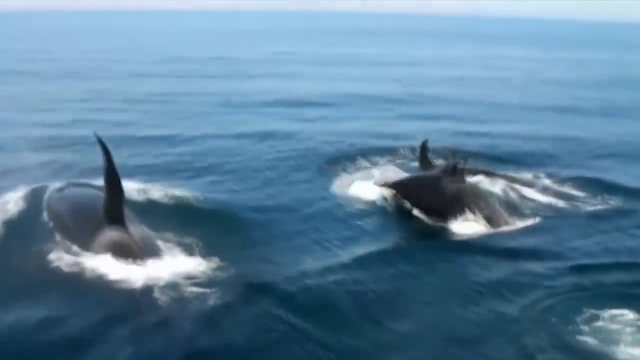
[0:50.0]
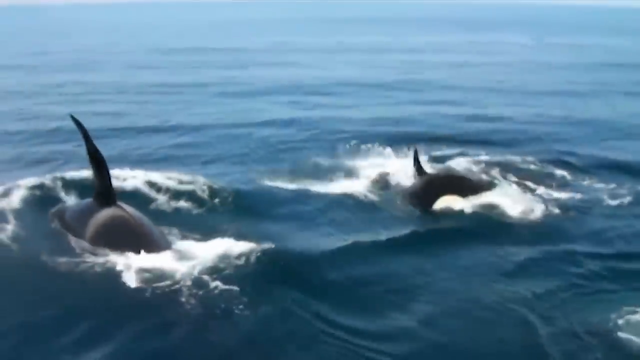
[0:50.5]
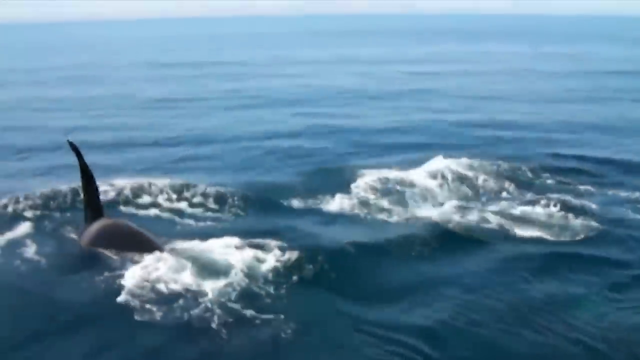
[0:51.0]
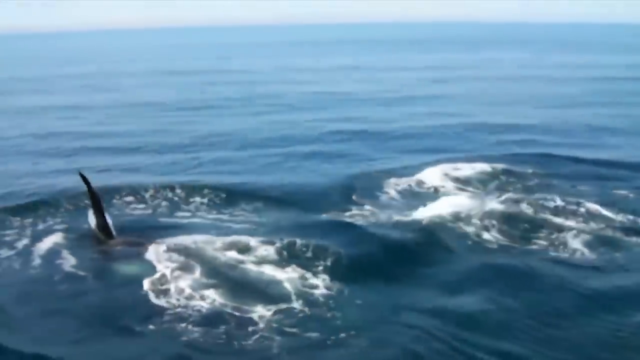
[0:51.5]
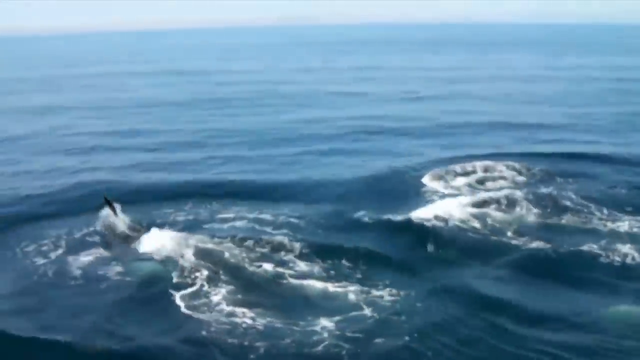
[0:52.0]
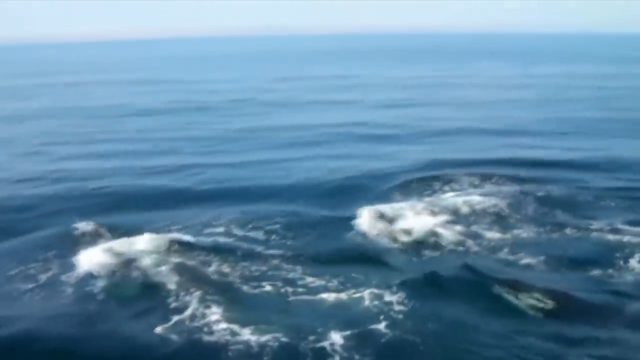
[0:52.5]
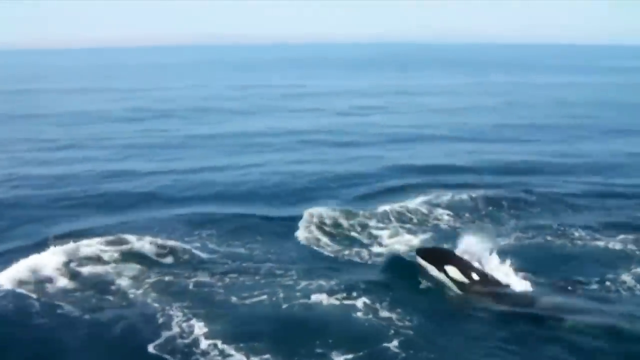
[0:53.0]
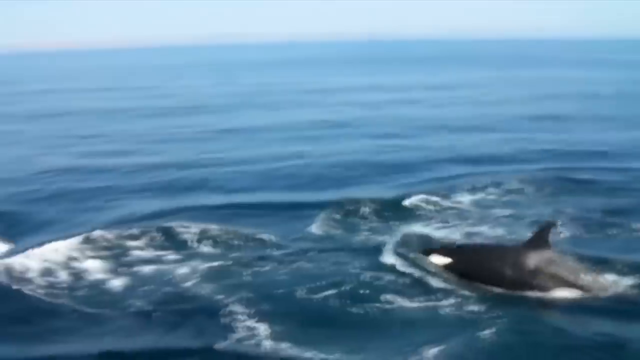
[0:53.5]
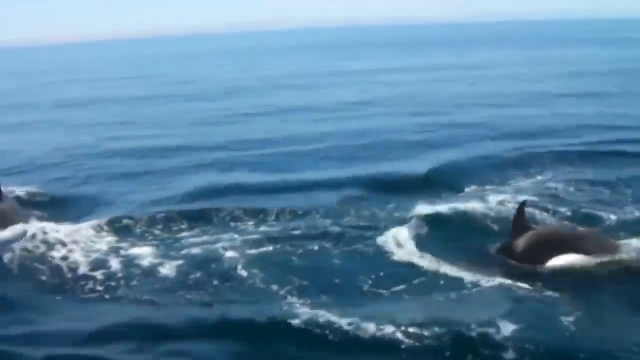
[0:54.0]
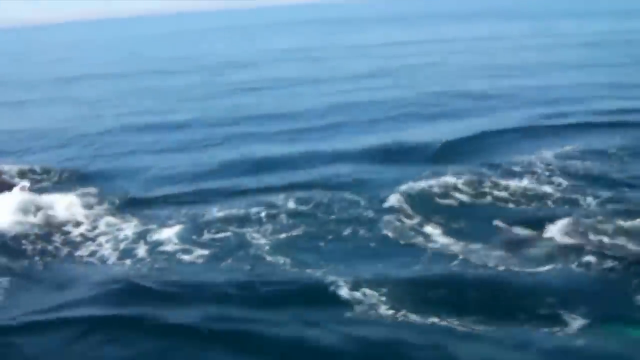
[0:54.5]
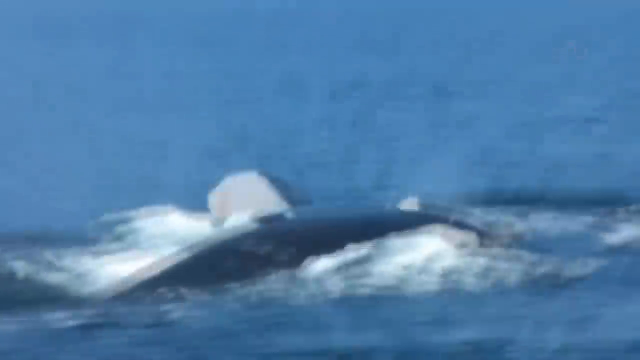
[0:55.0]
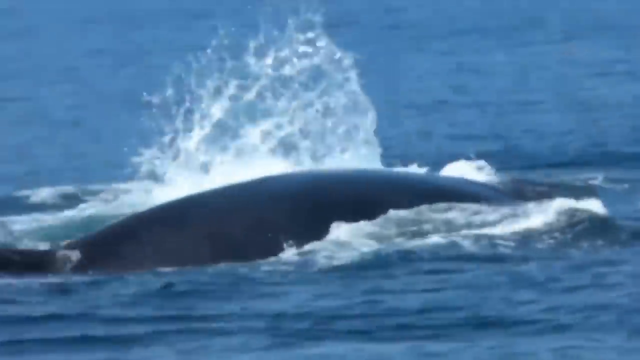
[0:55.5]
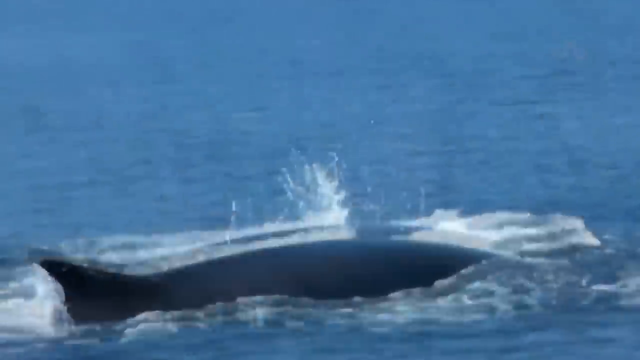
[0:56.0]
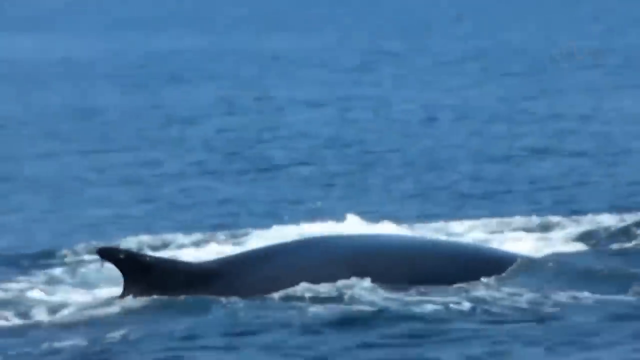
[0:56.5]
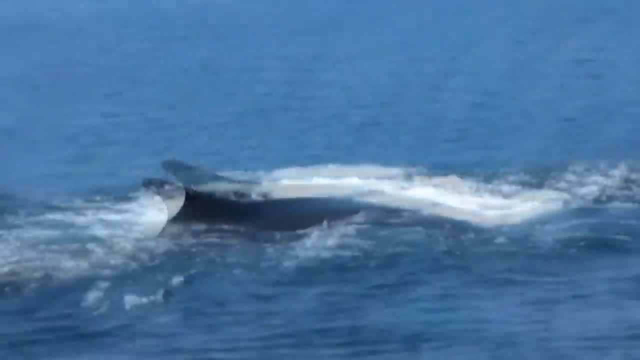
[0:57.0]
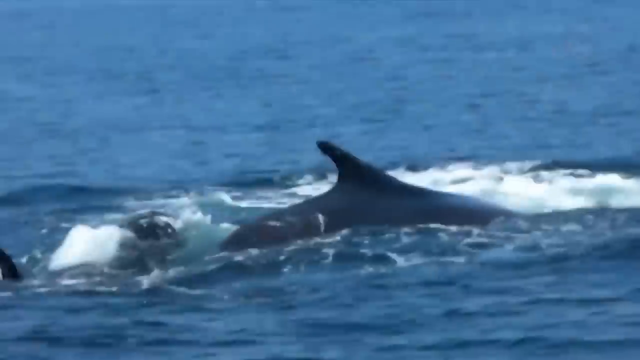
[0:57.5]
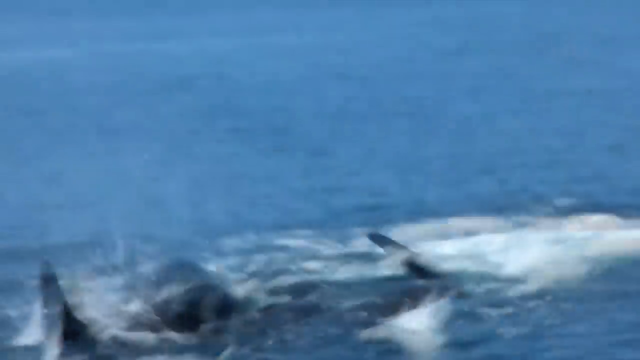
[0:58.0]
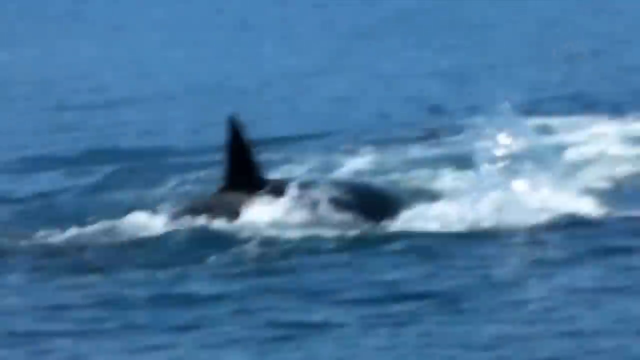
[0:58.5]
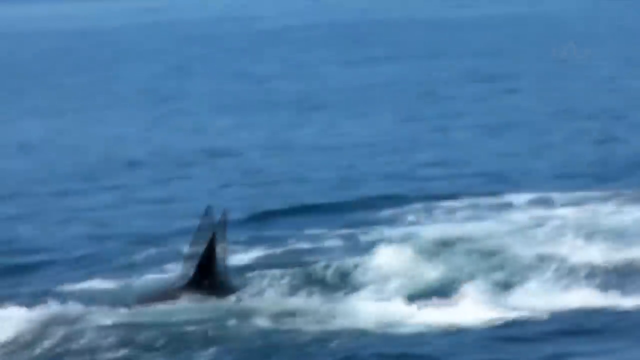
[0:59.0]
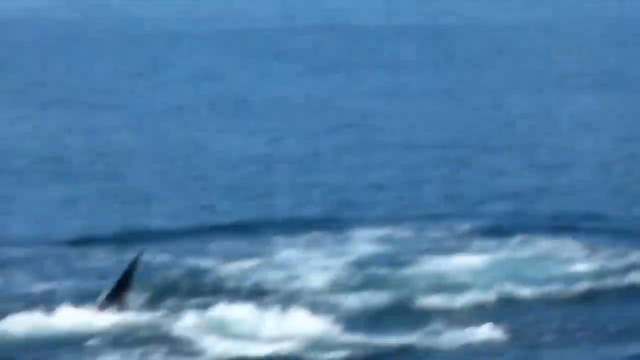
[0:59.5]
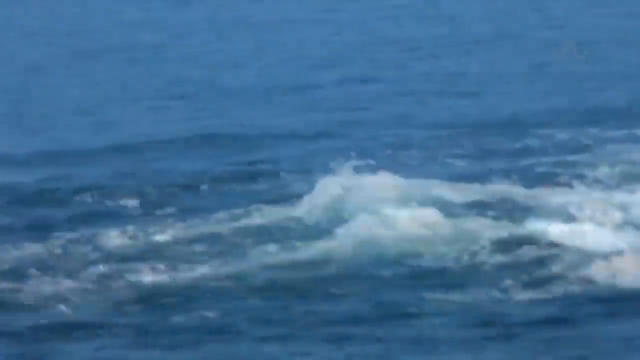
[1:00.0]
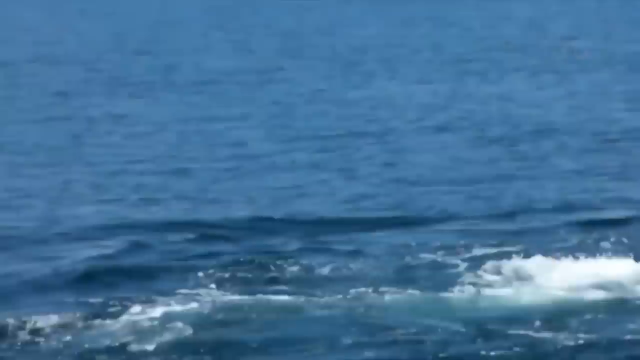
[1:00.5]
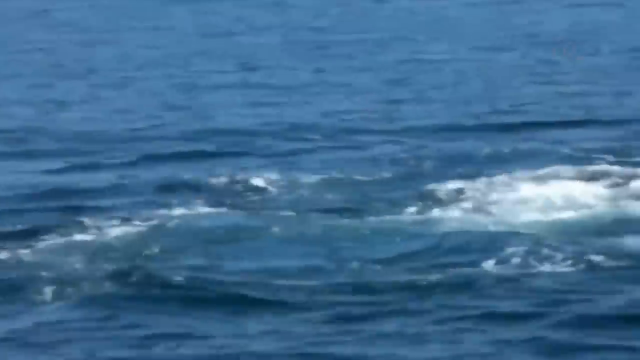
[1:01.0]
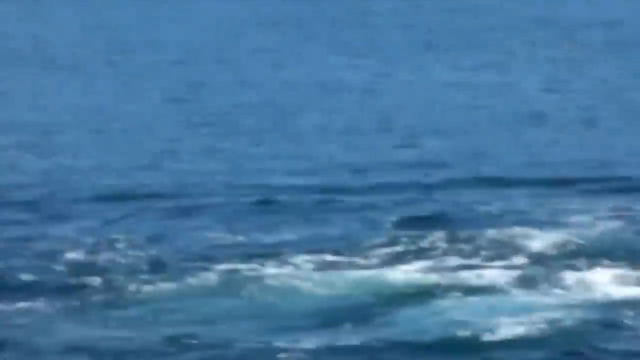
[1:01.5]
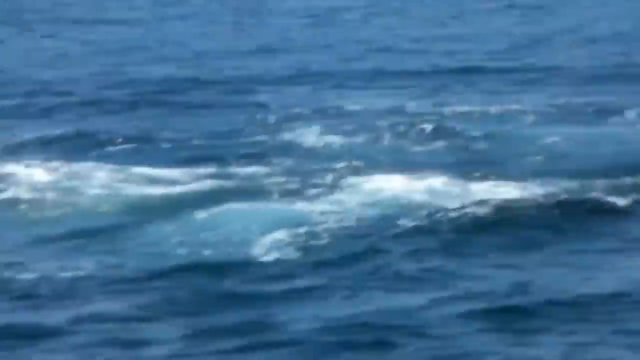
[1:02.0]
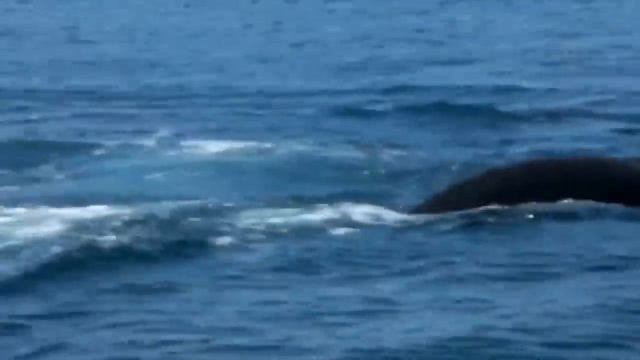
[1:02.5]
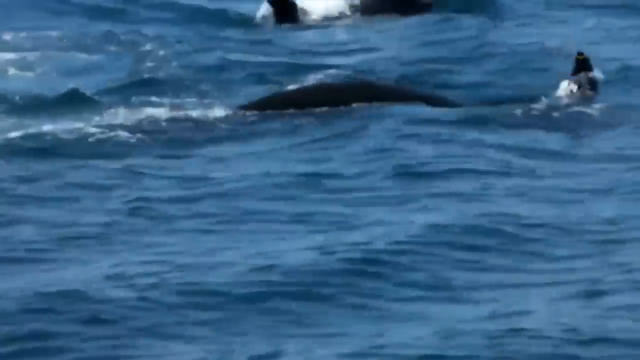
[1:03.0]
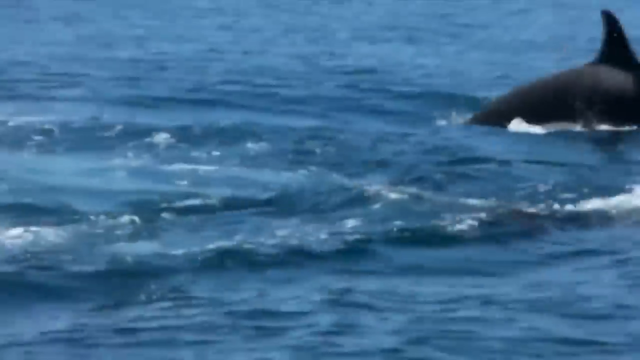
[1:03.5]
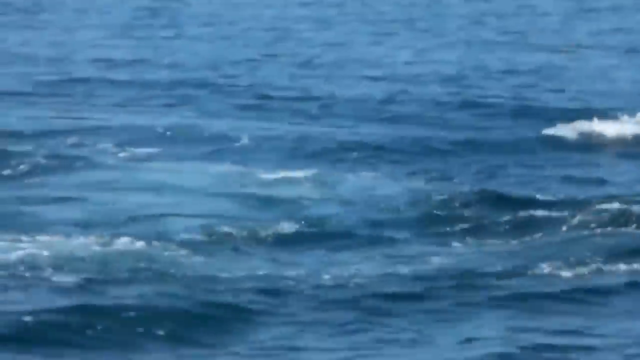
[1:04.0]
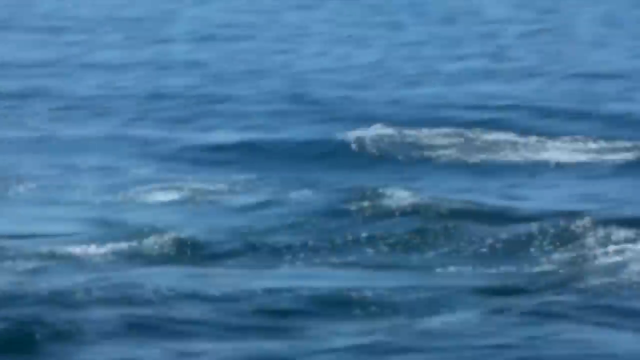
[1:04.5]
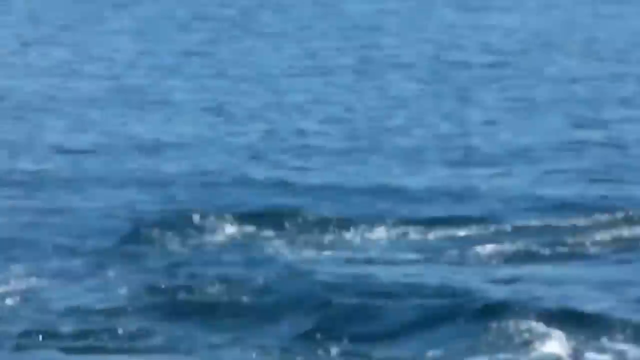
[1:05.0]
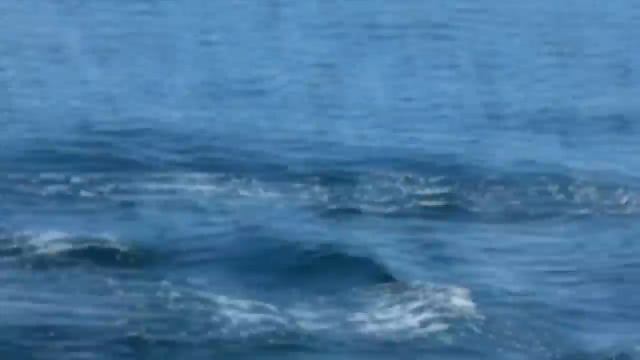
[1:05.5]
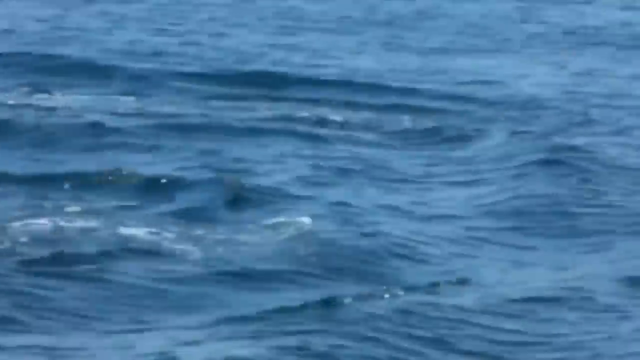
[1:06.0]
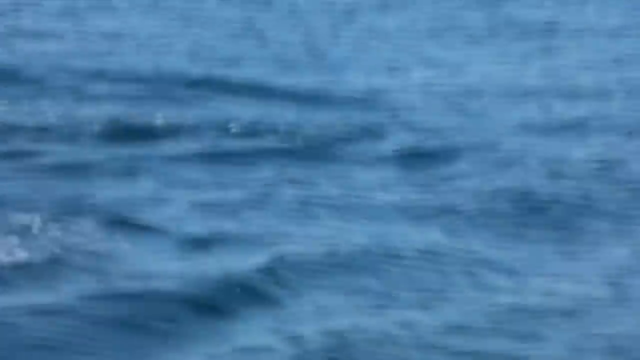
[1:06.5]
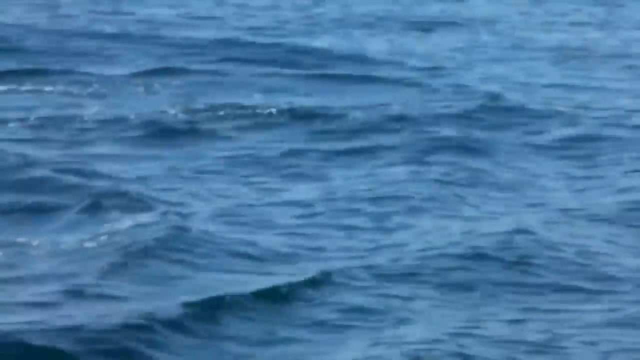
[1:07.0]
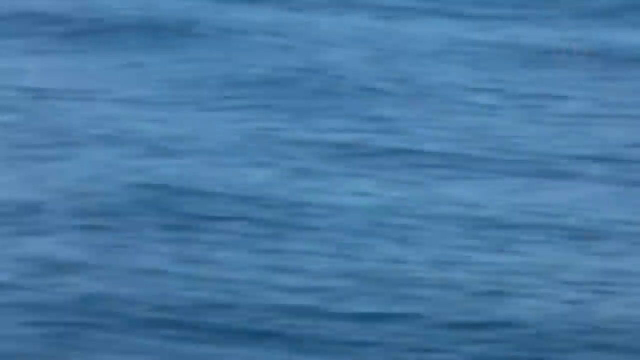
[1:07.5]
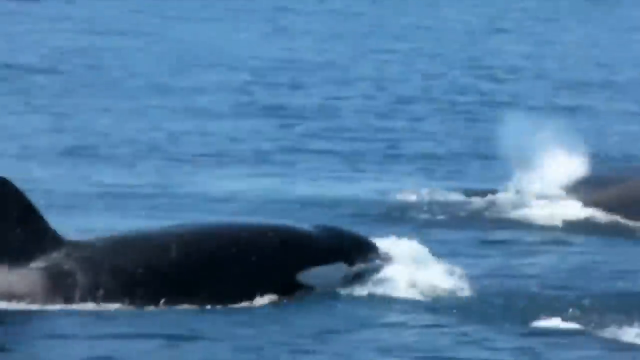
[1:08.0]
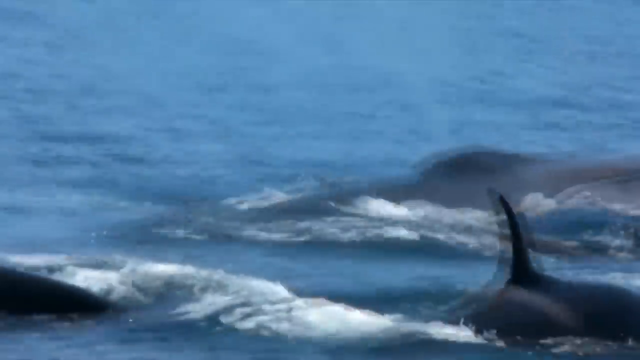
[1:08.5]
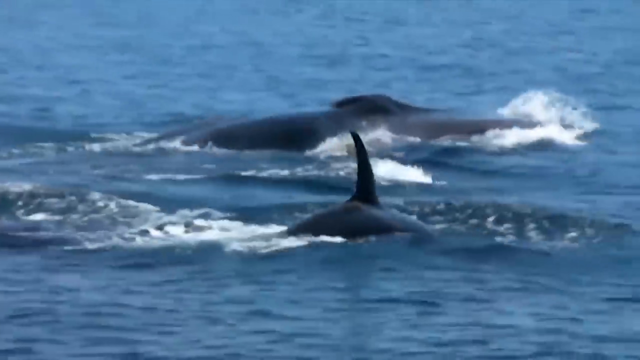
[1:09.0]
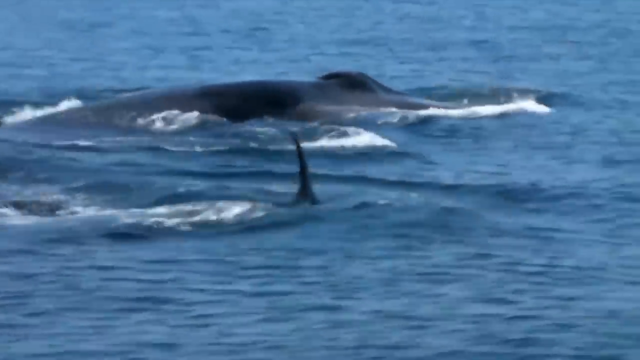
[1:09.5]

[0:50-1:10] A group of three orcas appears: a large one on the left-hand side and two smaller orcas off to the right-hand side of the screen. The whales breach the surface, exposing their dorsal fins, before disappearing back below. As they go under, a large ripple of water projects outward from each of them and there is a large splash. After those three disappear, a fourth orca off to the right-hand side of the screen, behind the group of two, appears, breaches the surface and disappears below. The video then cuts to a different scene where the large whale from before is exposed, with a group of two orcas off to its left and two orcas to its right. The orcas on the left breach the surface and disappear below in a very large splash. The large humpback then disappears beneath the surface as another orca appears to the rear left of the humpback, breaches the surface and disappears. The orcas continue rotating, breaching the surface and diving back below in an alternating fashion.